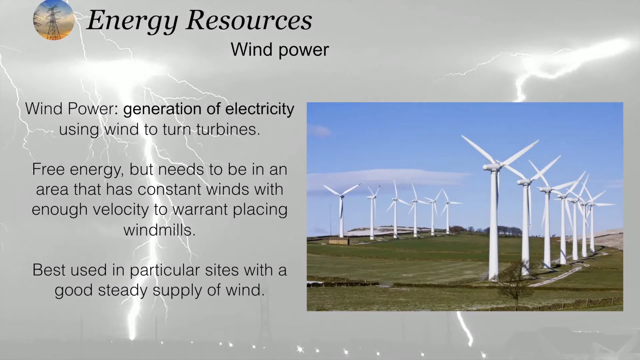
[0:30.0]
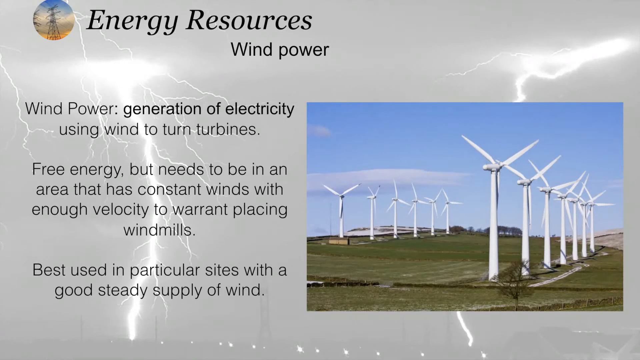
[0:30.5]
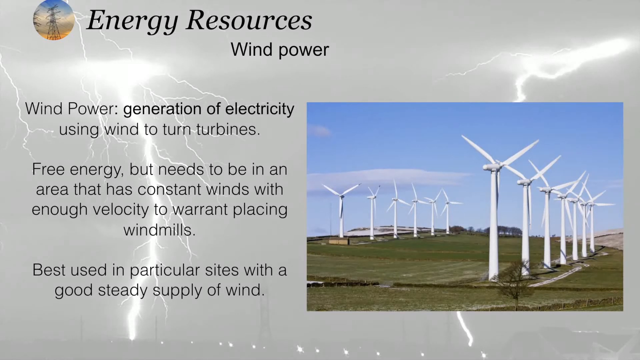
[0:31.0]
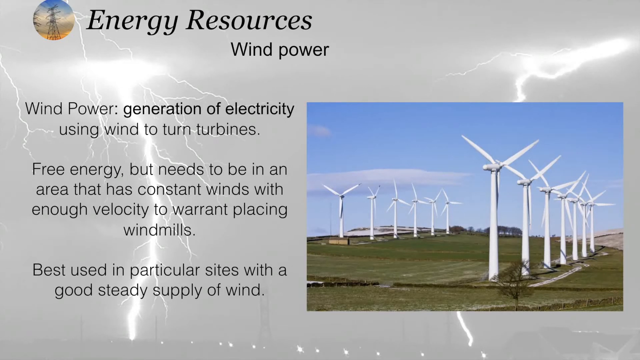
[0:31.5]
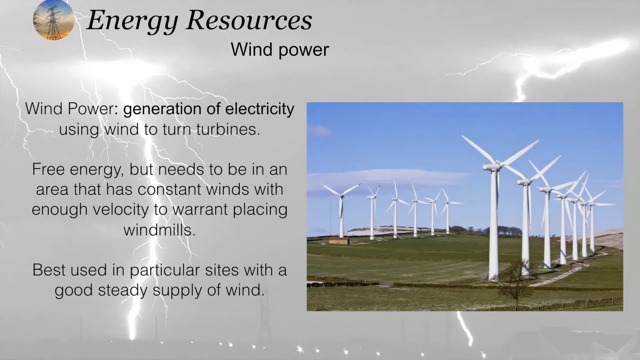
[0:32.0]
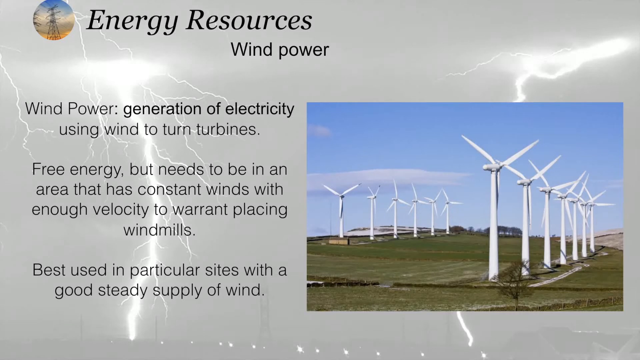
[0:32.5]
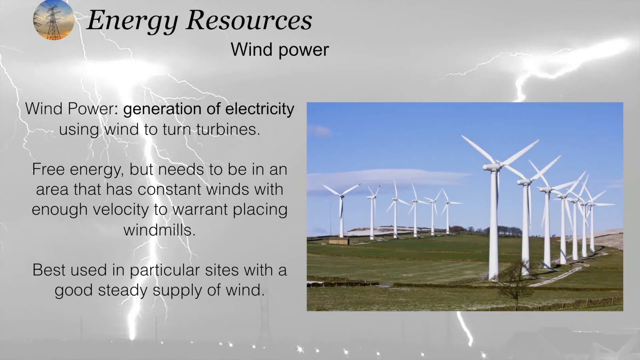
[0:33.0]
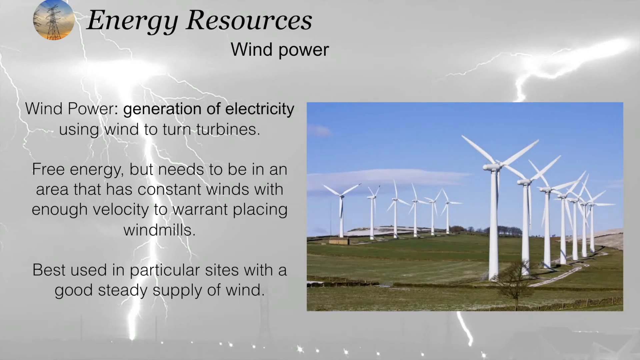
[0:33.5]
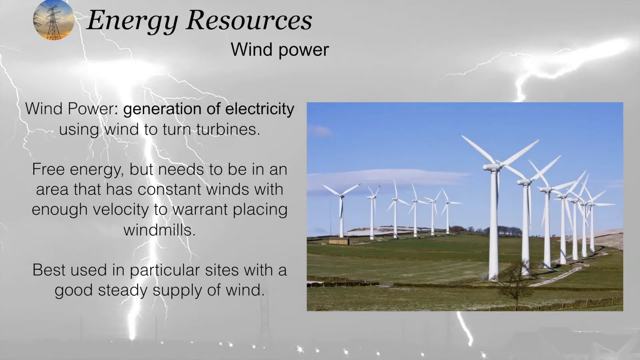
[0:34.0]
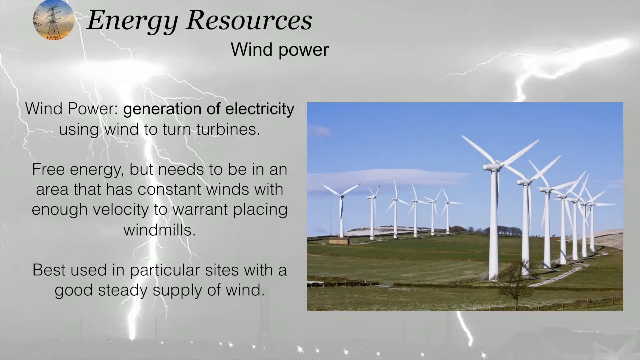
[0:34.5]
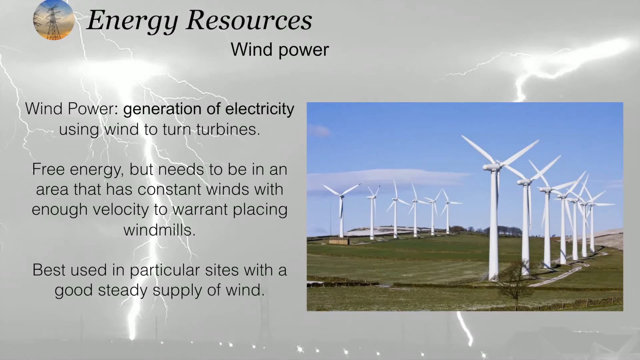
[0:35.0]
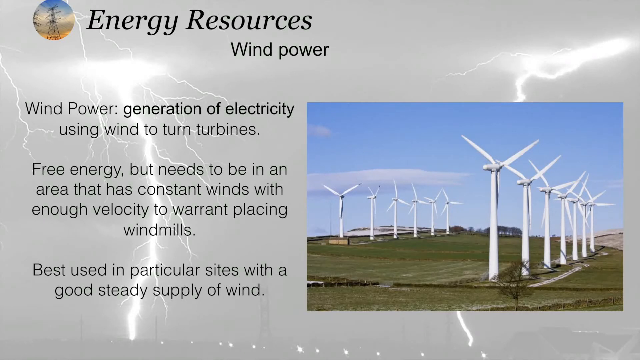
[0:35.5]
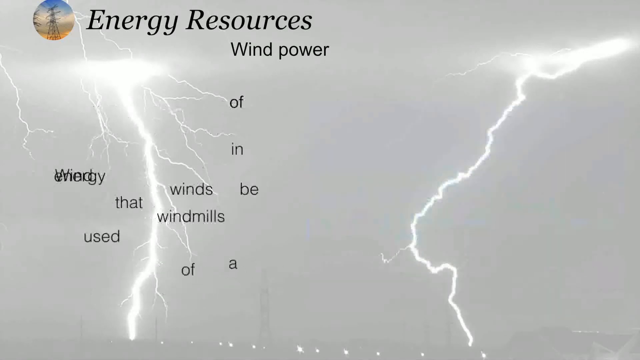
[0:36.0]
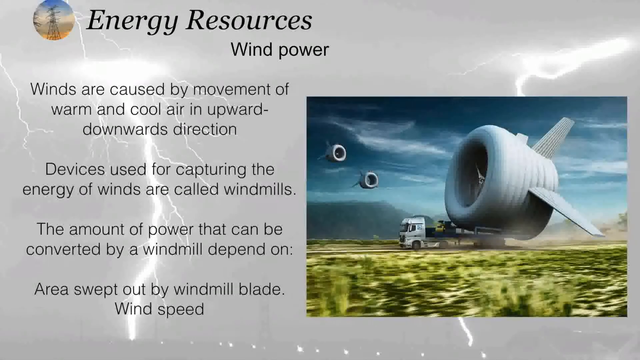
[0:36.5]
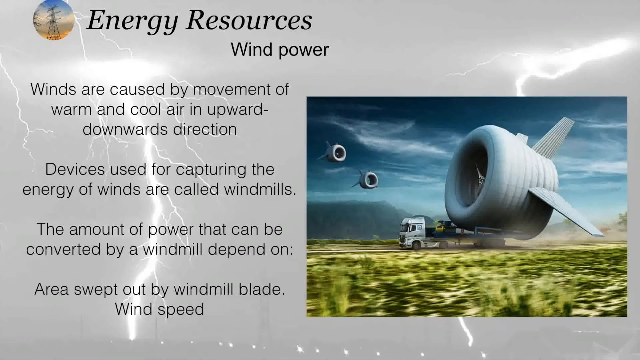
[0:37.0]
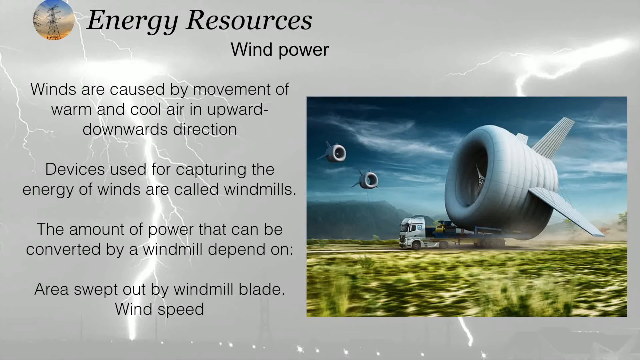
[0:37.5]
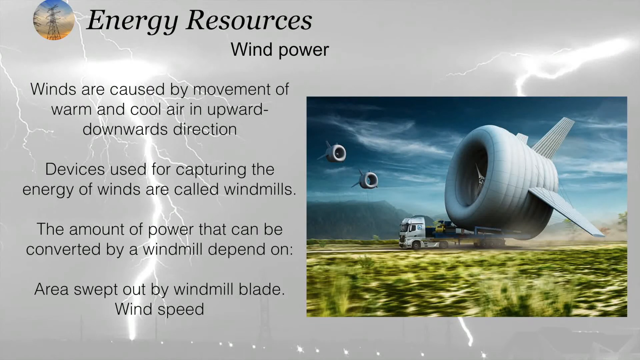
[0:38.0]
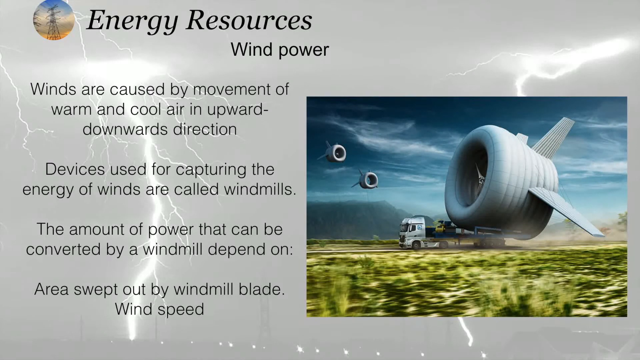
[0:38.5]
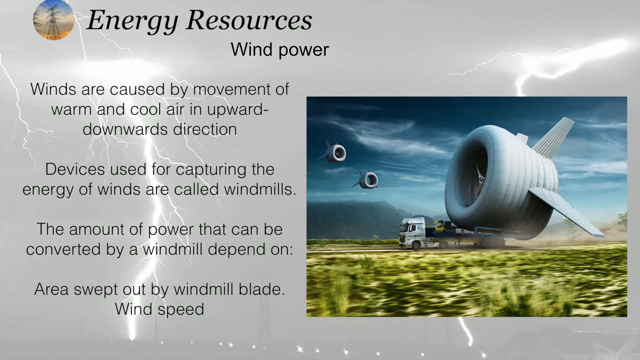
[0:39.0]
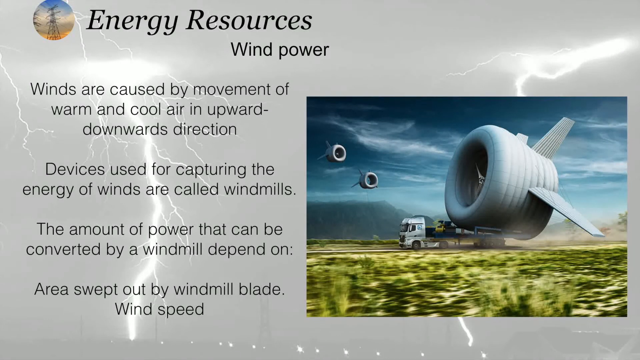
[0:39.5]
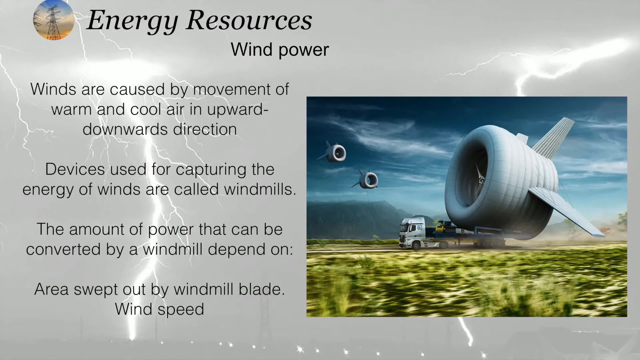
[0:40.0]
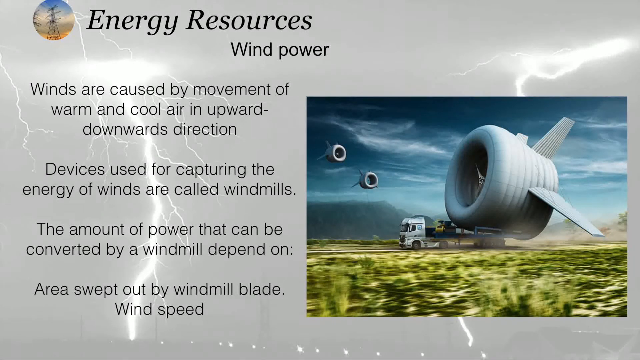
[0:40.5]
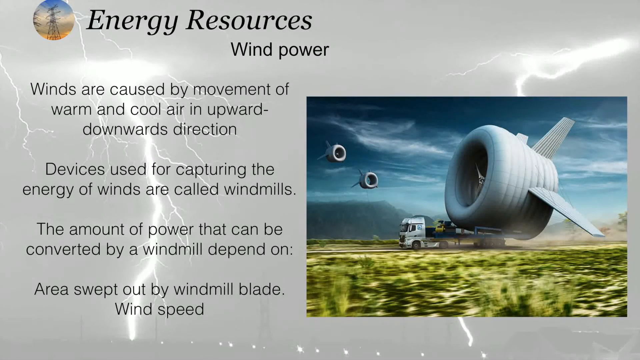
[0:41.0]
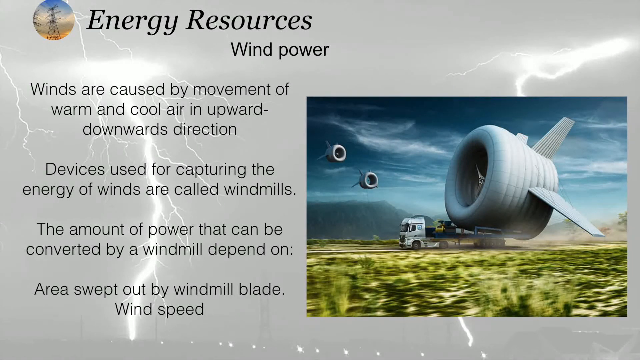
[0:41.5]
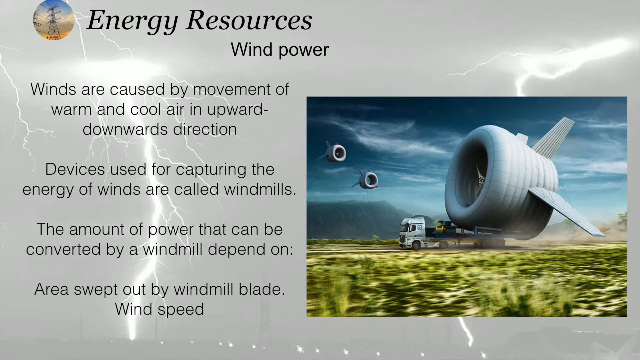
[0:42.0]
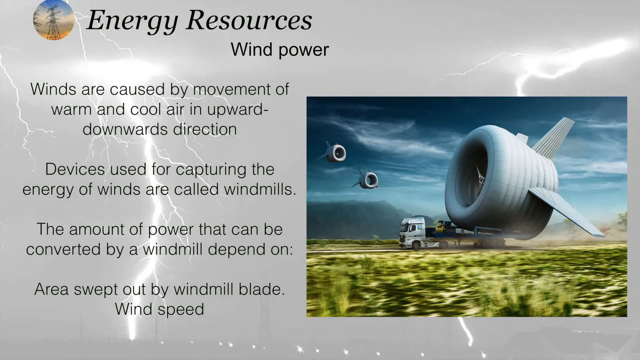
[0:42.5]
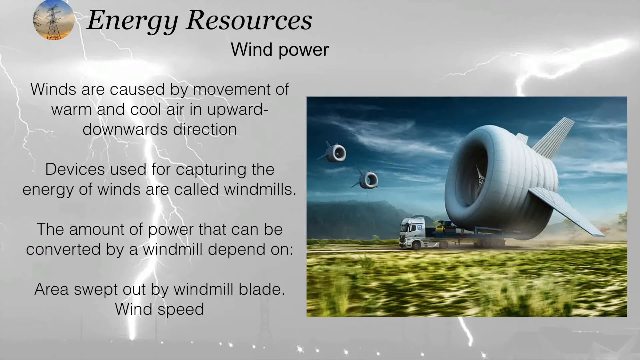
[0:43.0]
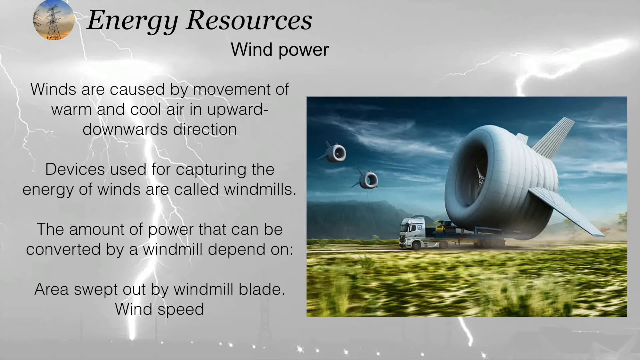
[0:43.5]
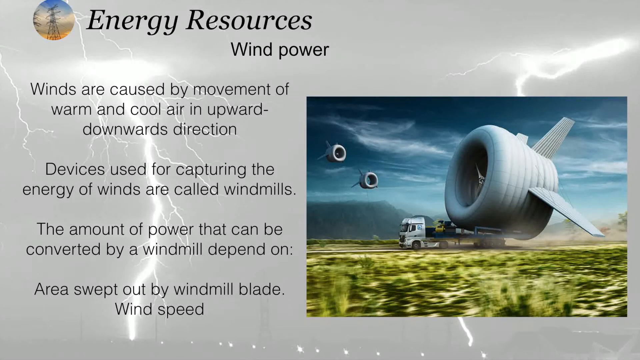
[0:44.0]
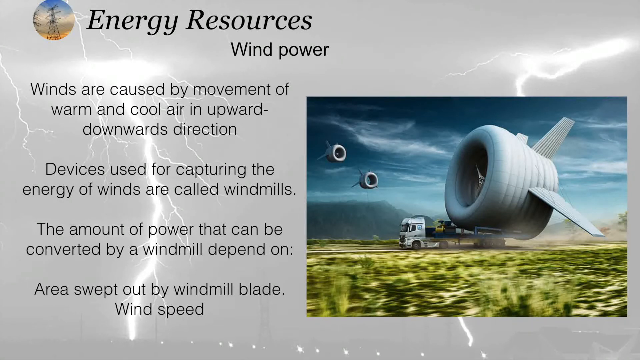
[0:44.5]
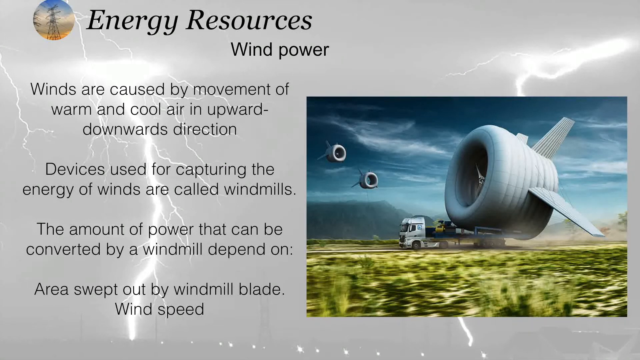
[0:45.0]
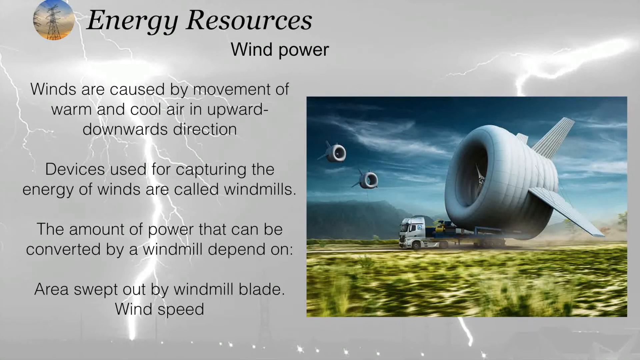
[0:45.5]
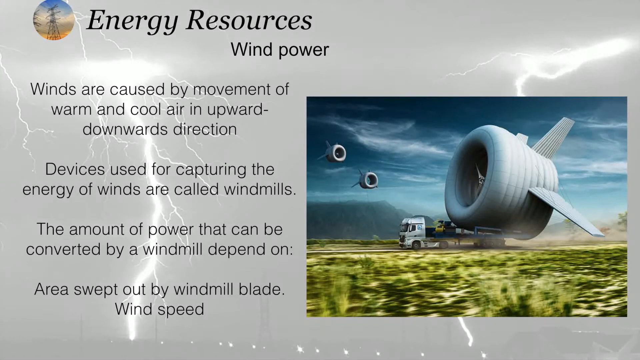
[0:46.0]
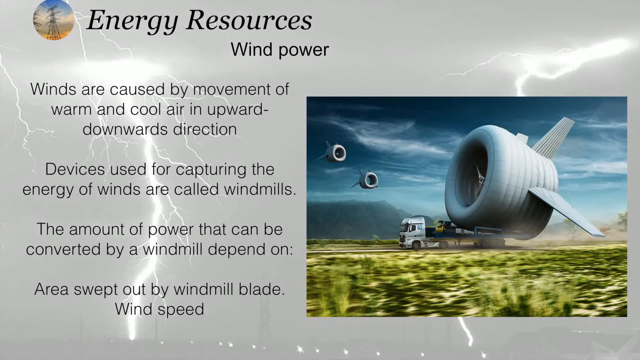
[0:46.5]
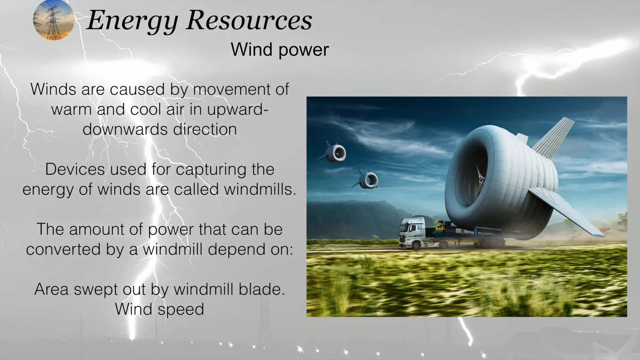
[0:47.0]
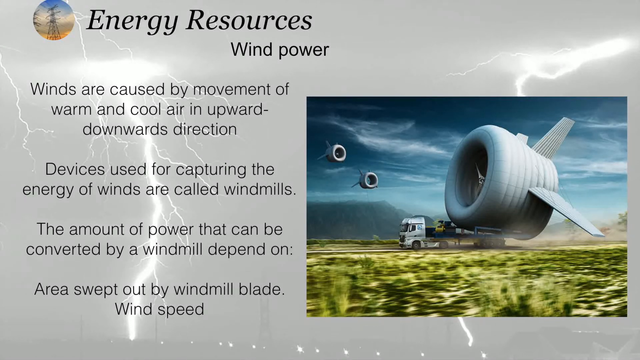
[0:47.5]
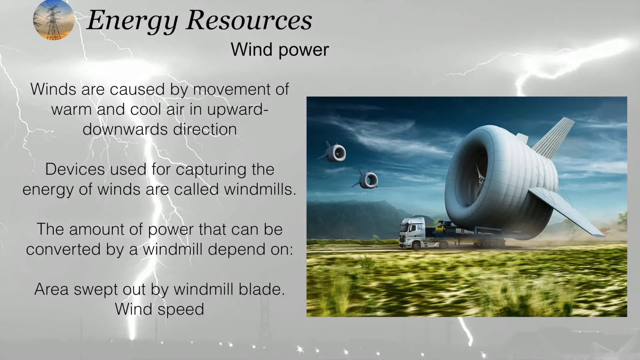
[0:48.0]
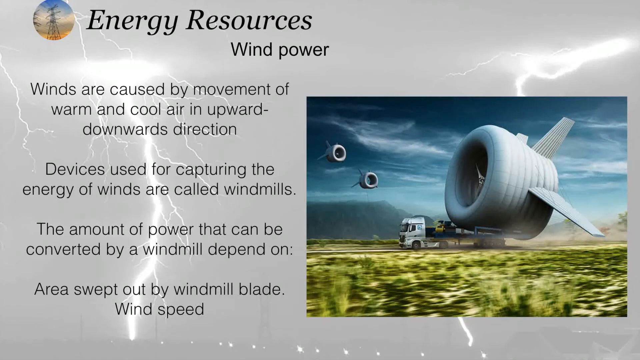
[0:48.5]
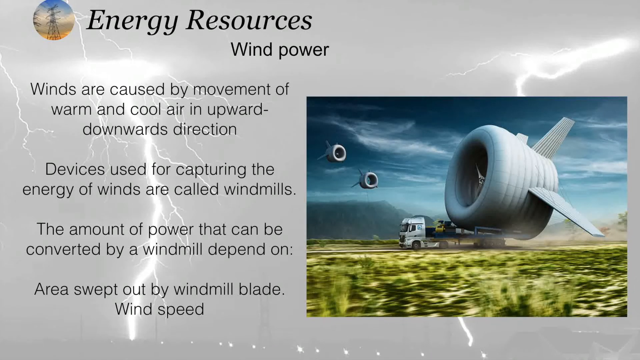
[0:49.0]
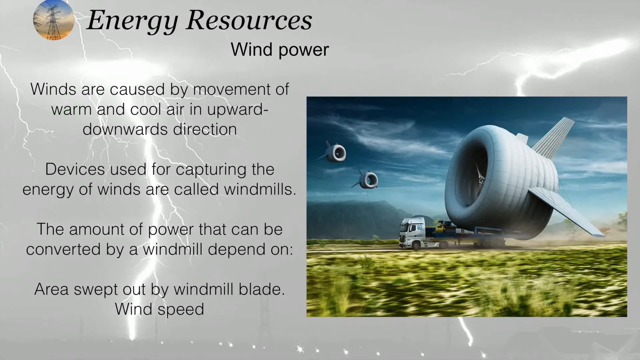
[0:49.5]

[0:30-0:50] On the left, behind the letters, a lightning strike has little pieces breaking off into smaller lightning strikes. On the right, just the top of a lightning strike is visible, going behind a picture of six windmills in a row on the left side and six in a row on the right side, with blue sky and green grass. The windmills are white with three blades. In the top left corner is the profile picture, with "energy resources" to its right and "wind power" right below, all in black. Down the left side is the text "wind power generation of electricity using wind to turn turbines," below that "free energy, but needs to be in an area that has constant winds with enough velocity to warrant placing windmills," and after a little space, "best used in particular sites with a good steady supply of wind." The words then move around a little; the top still says "energy sources," and different words appear down the left side. On the right side is a dark stormy sky with a huge wind turbine on the back of a white semi truck heading to the left. The turbine is huge, probably 10 times the size of the semi, with little wind blades coming off the back. Two turbines are in the air up to the left of the semi, and there is green grass below the semi.